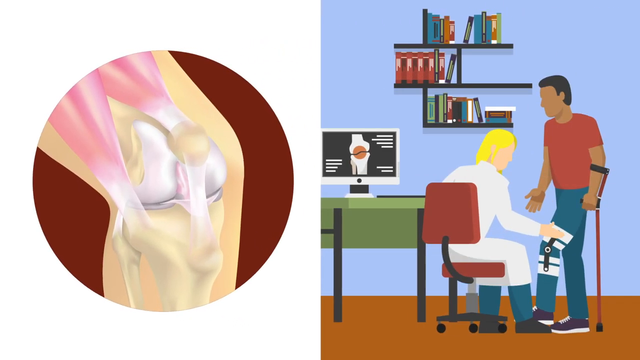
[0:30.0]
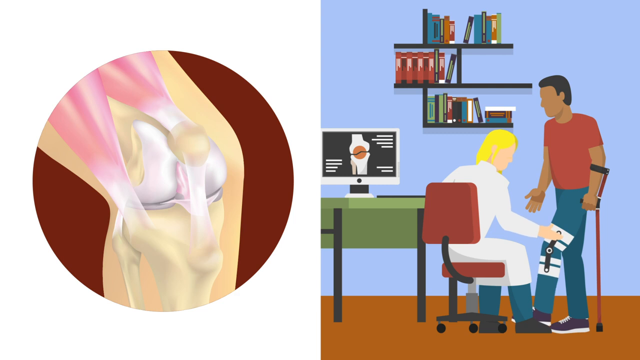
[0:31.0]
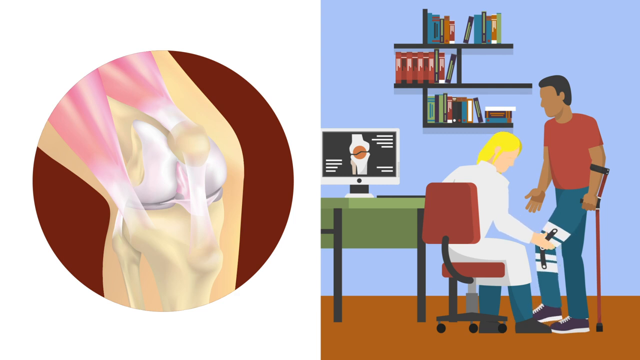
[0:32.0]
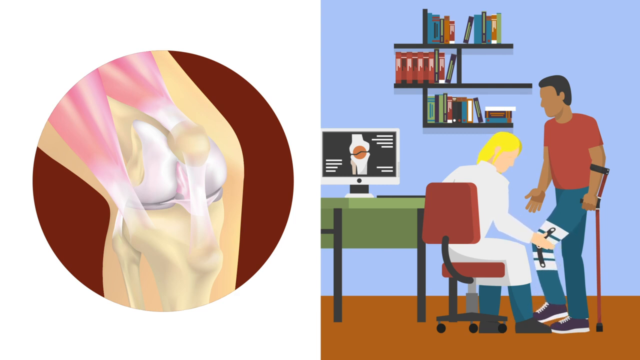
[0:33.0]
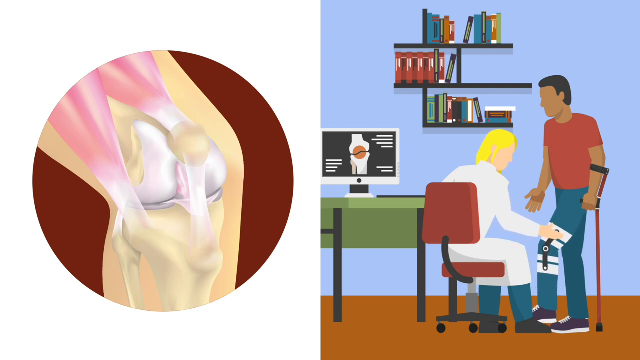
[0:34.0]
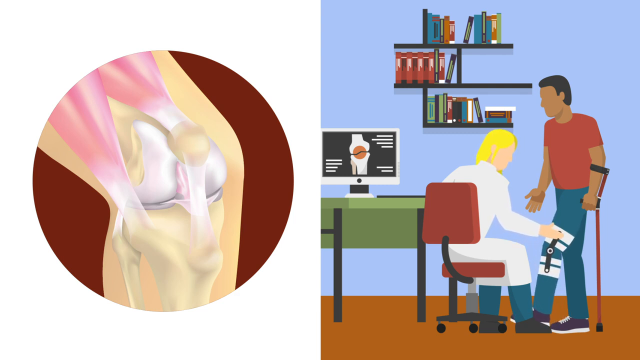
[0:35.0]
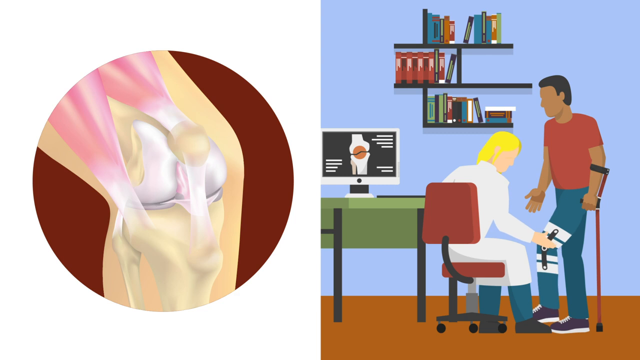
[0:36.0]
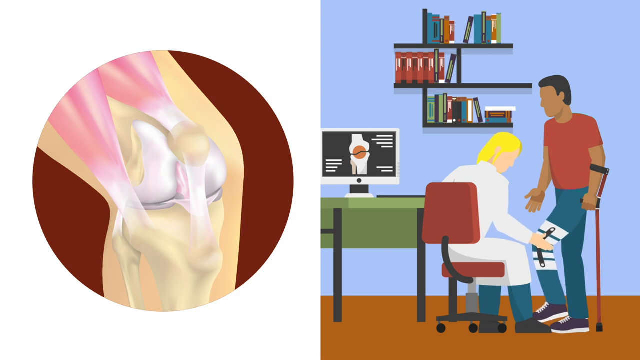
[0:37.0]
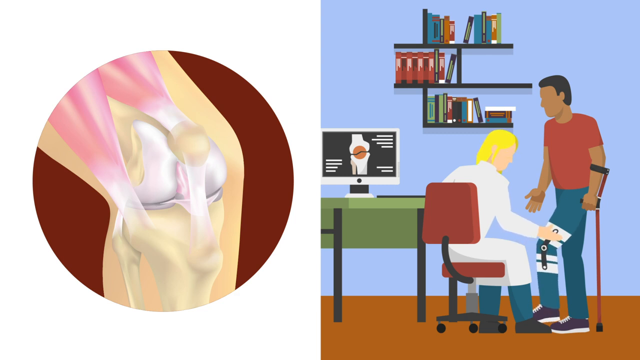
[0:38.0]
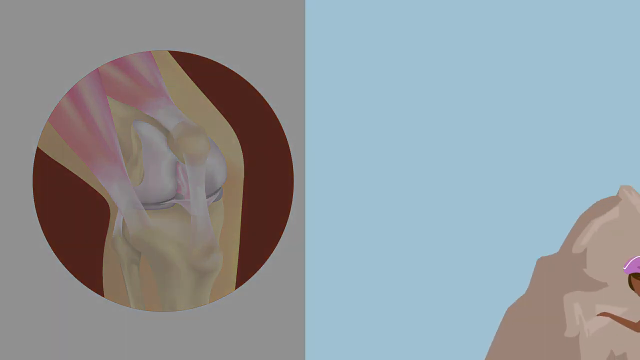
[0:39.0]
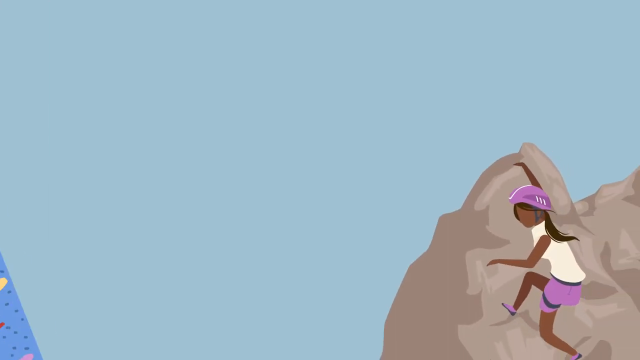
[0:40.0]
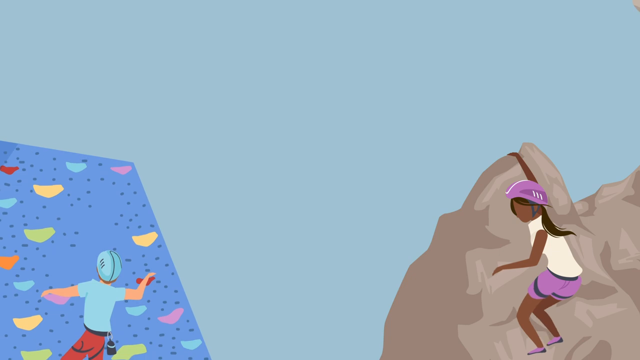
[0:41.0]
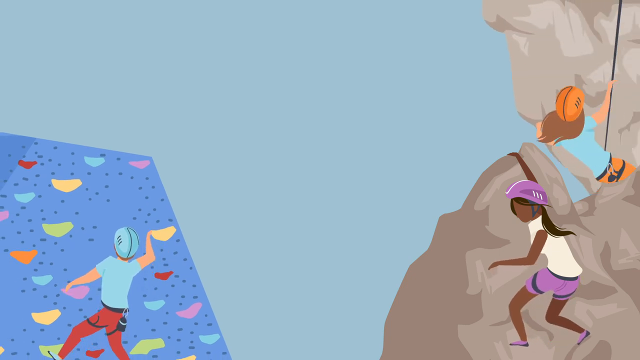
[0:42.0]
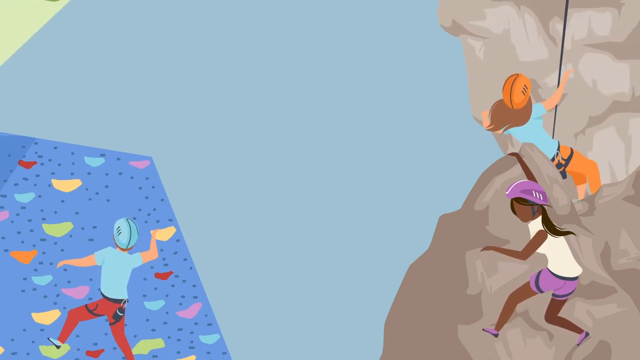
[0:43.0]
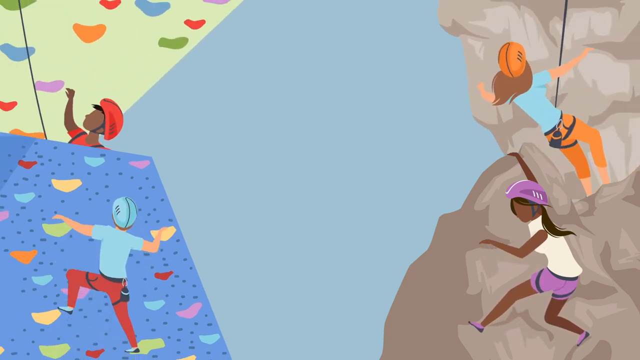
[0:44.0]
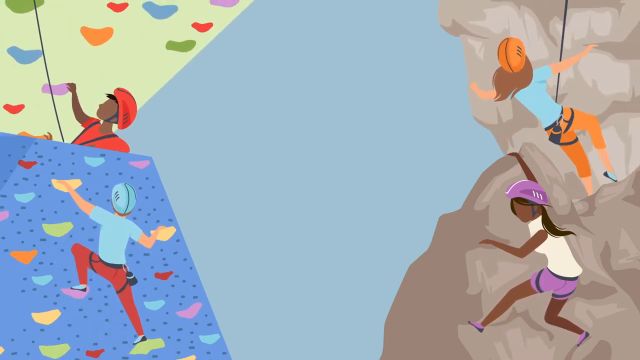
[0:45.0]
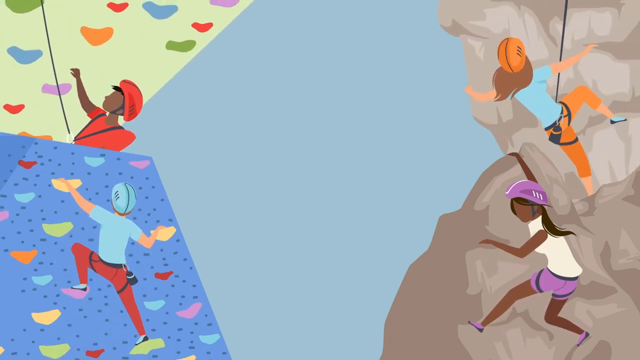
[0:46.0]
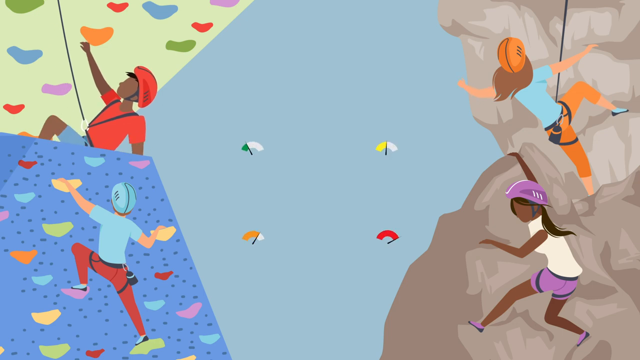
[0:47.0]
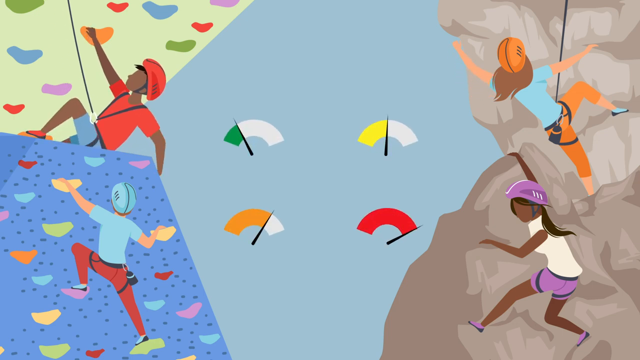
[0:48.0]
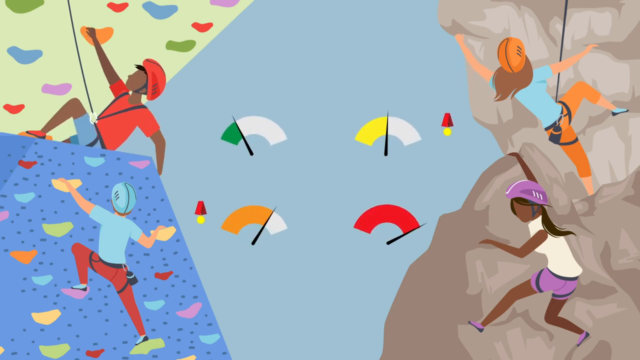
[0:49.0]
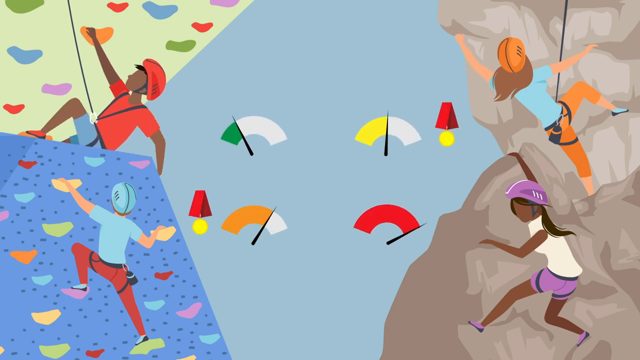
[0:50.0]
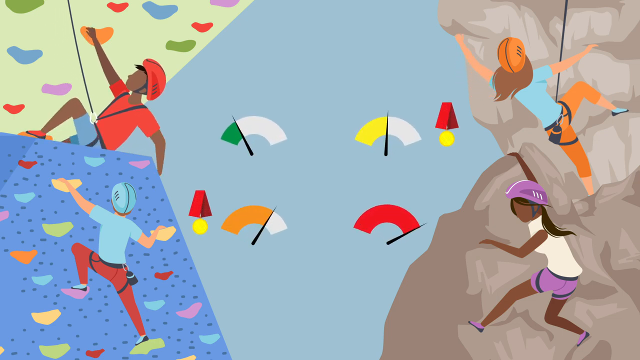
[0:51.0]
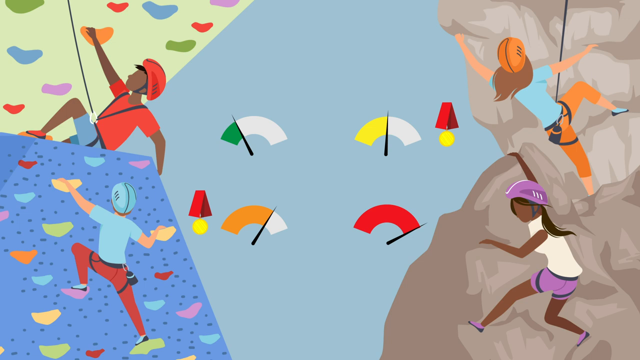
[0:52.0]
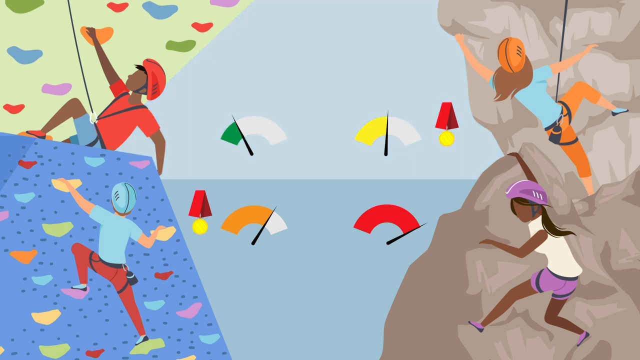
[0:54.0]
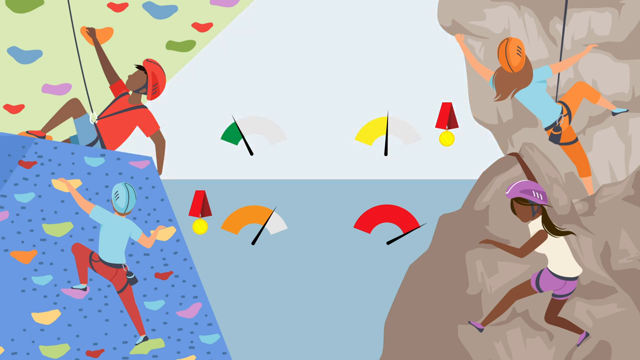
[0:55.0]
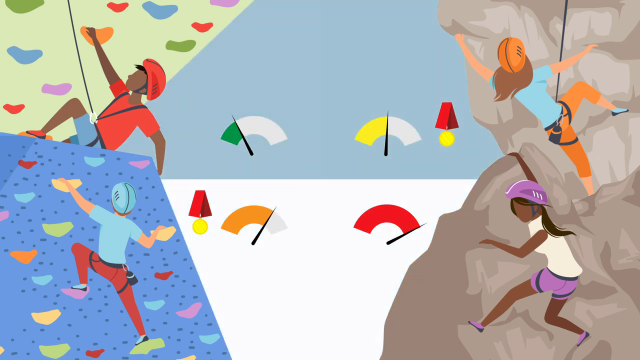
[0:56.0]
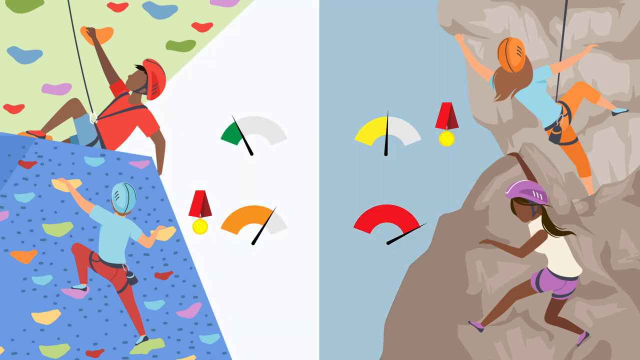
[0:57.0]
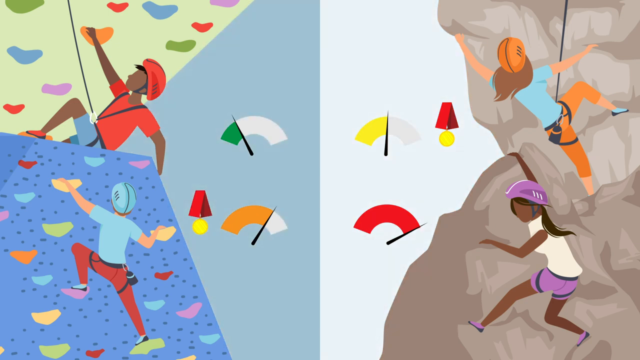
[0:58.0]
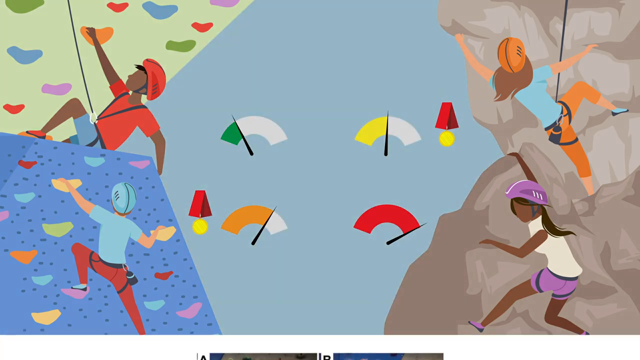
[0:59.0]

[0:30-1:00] The screen is split. The left side is all white with a red circle in the center containing an illustration of a person's knee, showing the knee, the leg bones and the thigh muscles. On the right, in a doctor's office, a doctor in a red shirt and white coat is sitting, bent over and looking toward the right side of the screen. His right arm is out, touching the thigh of a man who faces him and is standing up. The man has a cane that goes over his forearm and touches the ground, and white bands around his left leg where the doctor touches him. The doctor moves his hand down and the man bends his left leg up; the doctor repeats the motion and the man's left leg moves up again. Then a blue screen comes in from the left side. Its right side shows people climbing rocks, its left side shows people climbing sports rock walls, and in the center are a bunch of gauges that look like speedometers or something, and a couple of things that look like lamps.